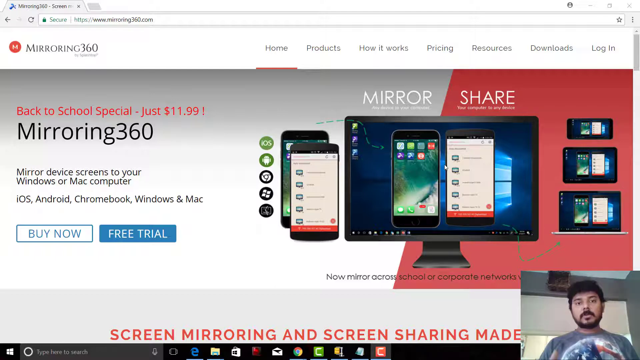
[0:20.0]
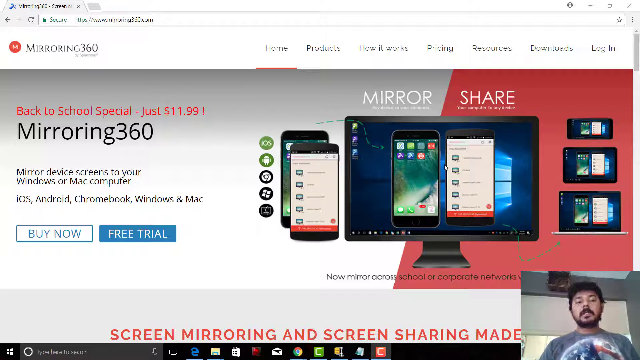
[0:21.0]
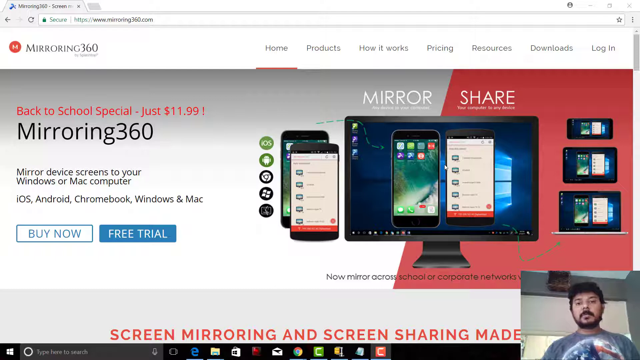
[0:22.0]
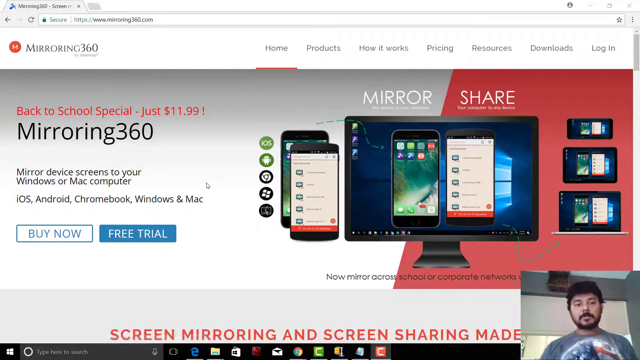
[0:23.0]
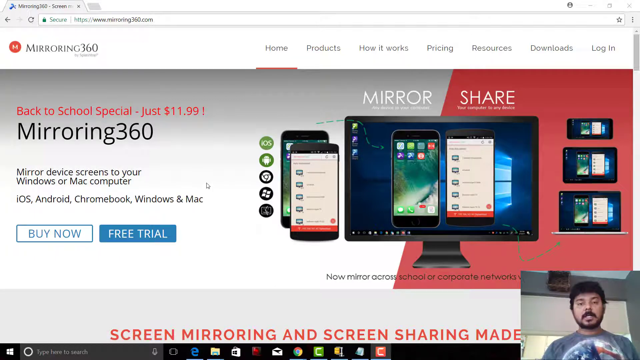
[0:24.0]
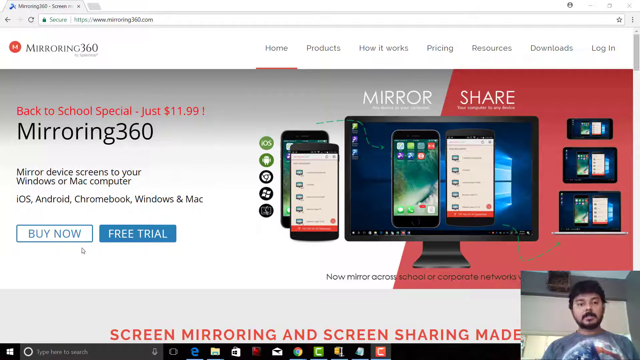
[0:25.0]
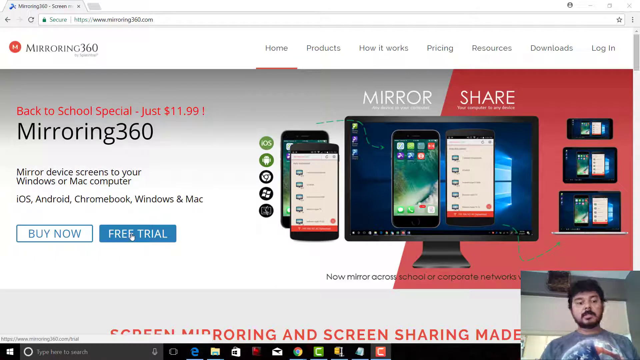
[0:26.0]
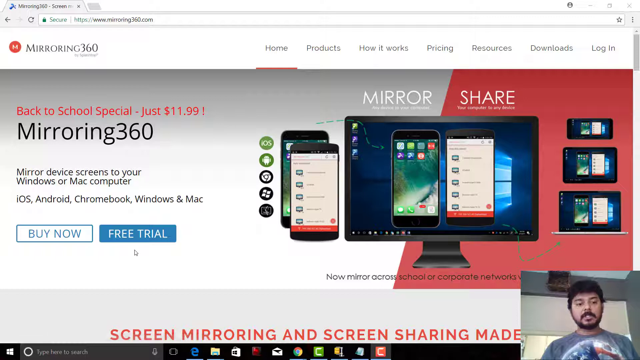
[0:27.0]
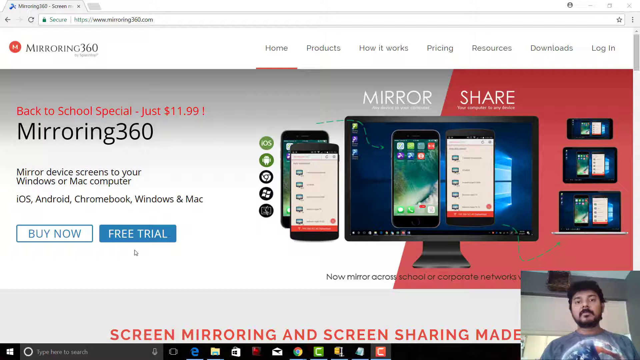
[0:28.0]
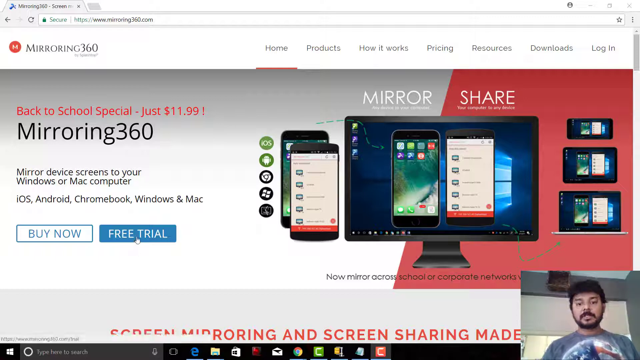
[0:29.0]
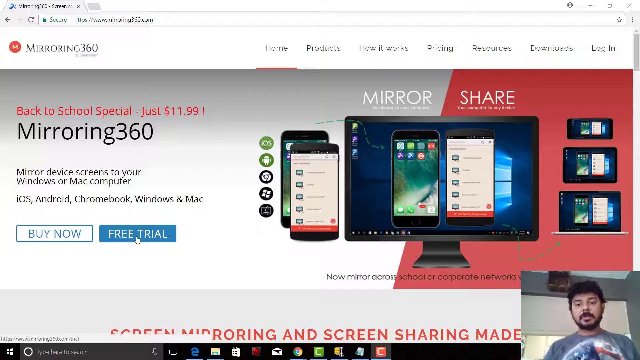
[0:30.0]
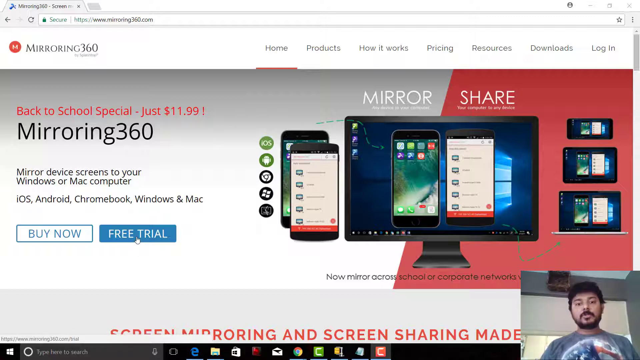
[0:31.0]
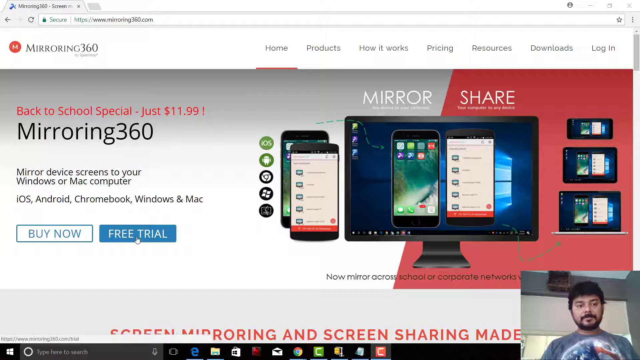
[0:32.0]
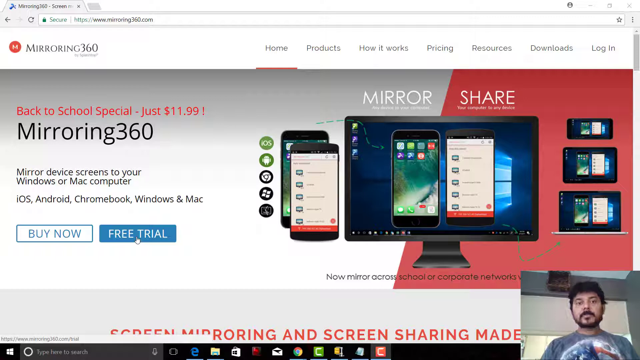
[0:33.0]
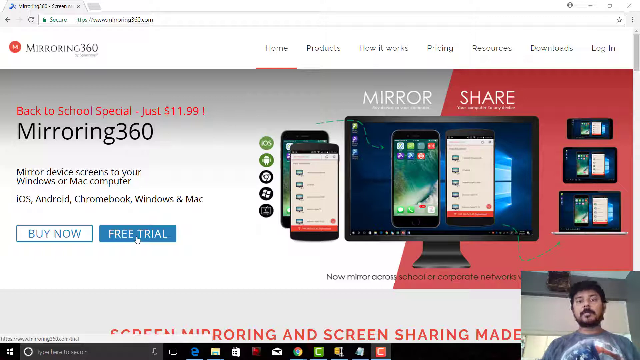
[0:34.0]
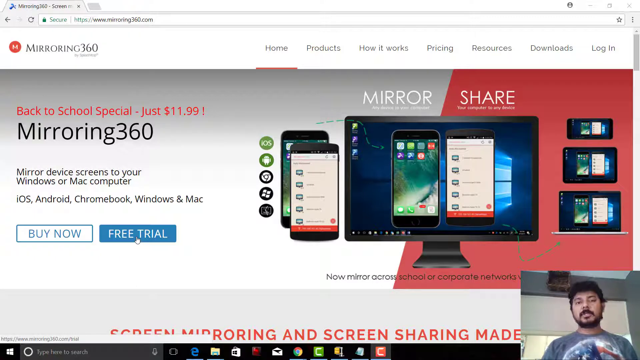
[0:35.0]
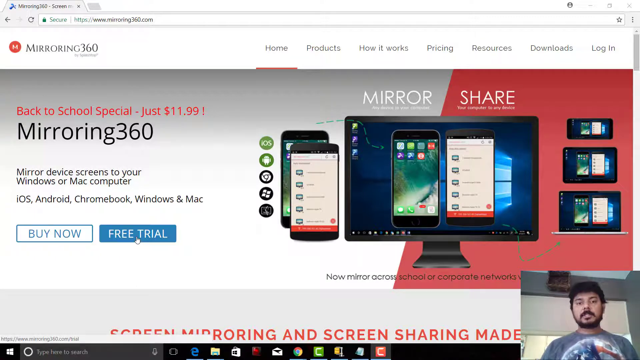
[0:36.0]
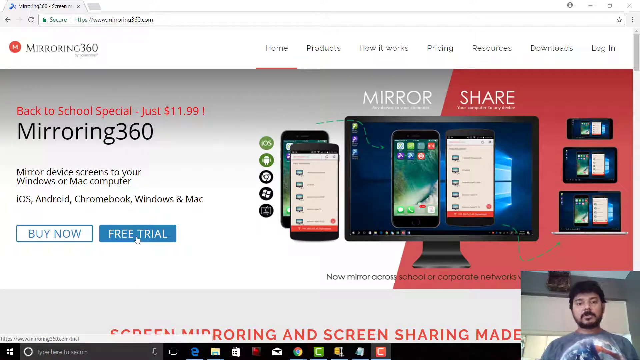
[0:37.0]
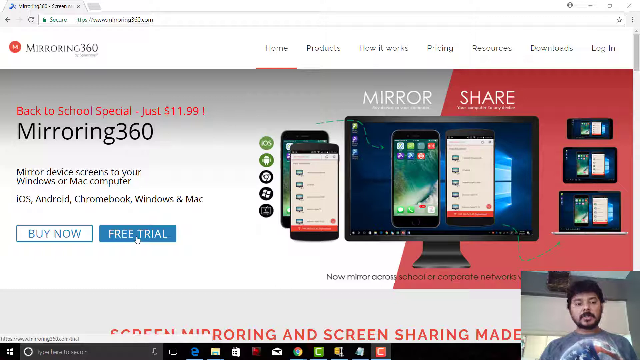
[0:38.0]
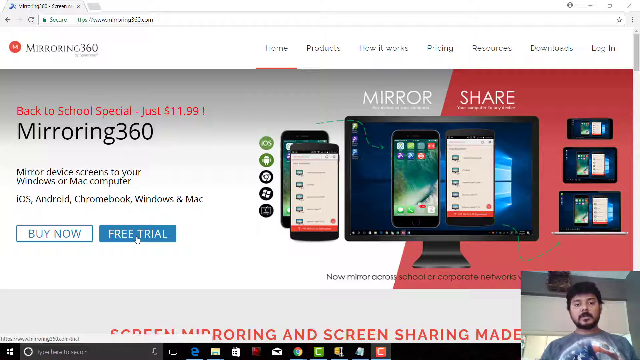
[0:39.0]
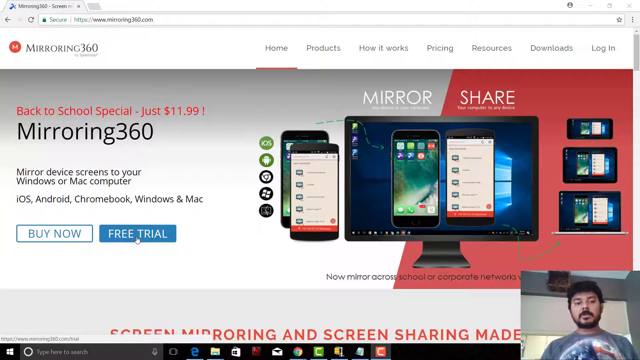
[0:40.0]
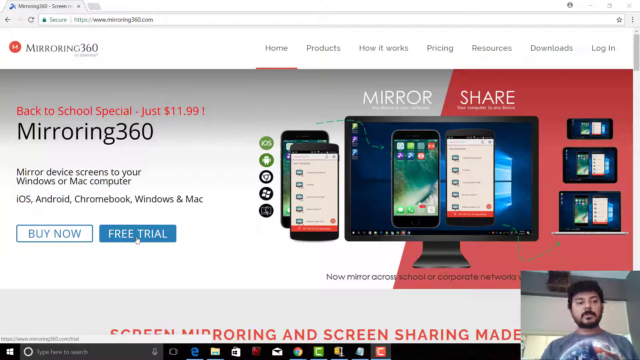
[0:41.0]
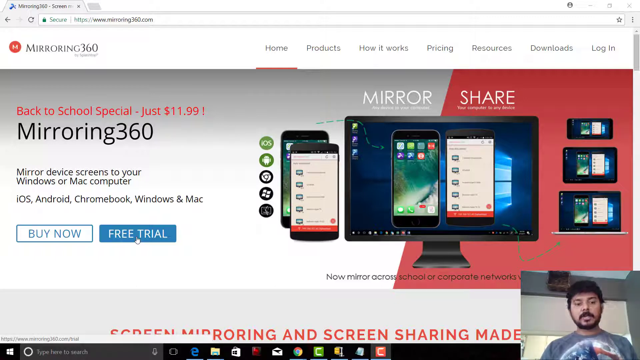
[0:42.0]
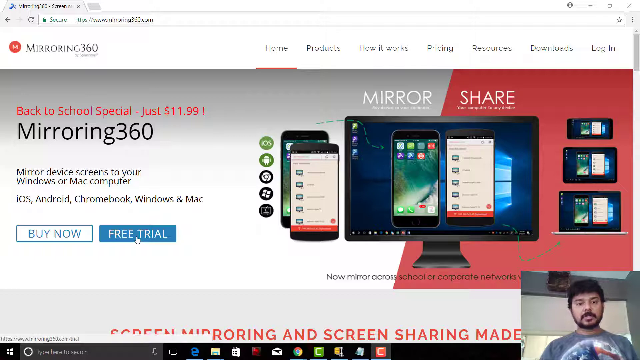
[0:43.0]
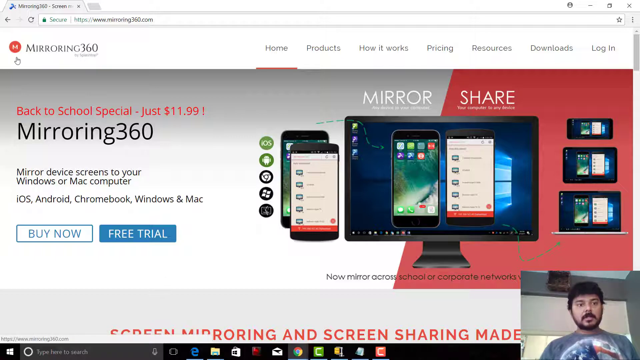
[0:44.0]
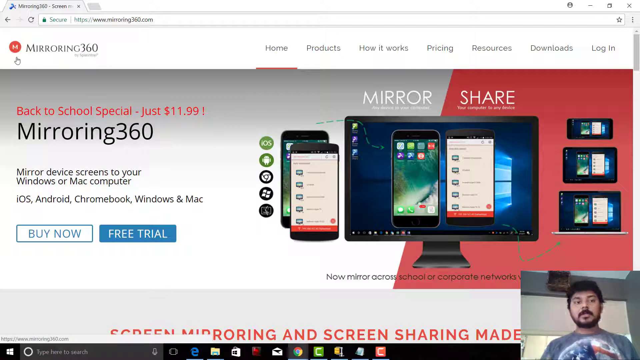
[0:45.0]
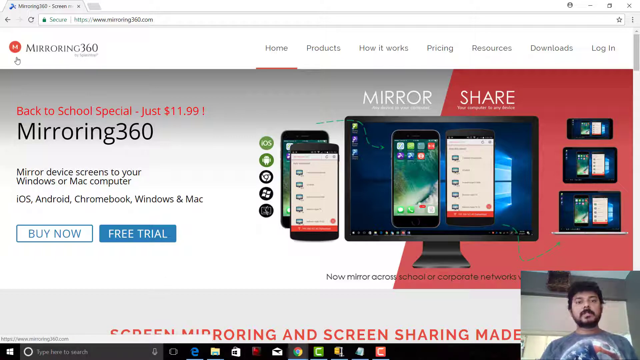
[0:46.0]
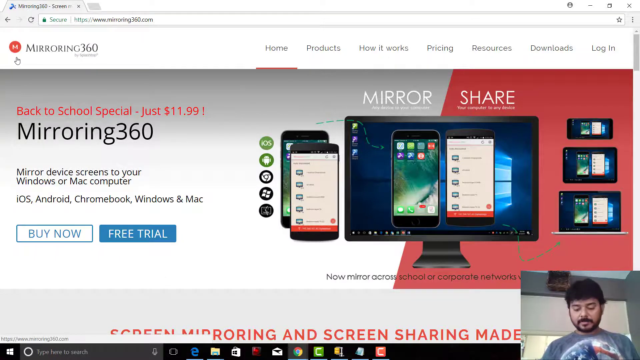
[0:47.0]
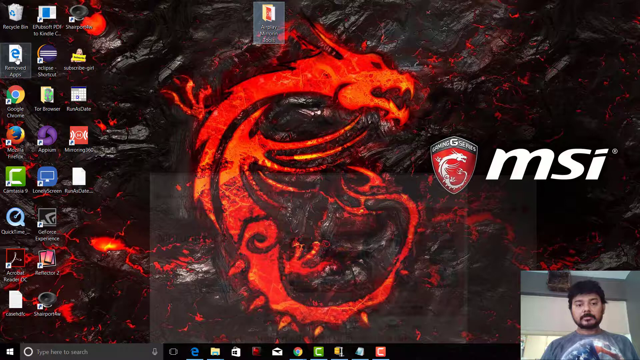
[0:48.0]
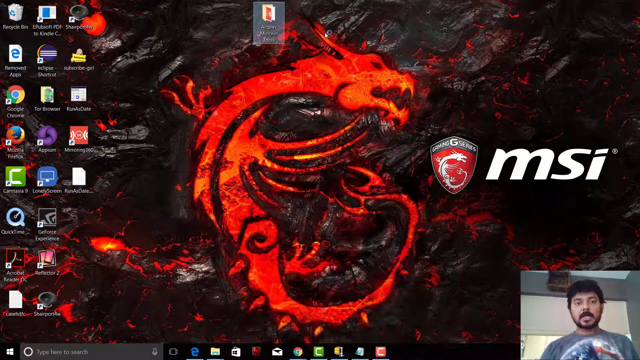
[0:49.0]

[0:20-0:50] A computer screen is shown, with a man talking in the lower right corner. The web page shows the back to school special for just $11.99 for a mirroring product that can "mirror device screen to your Windows or Mac computer." The man drops that page down, revealing his computer screen, which has a drawing of a red dragon with its head turned towards the right and sharp teeth, with something kind of like red fire coming out the sides. On the right of the screen there is a smaller white emblem of a dragon with "msi" in all lowercase letters.